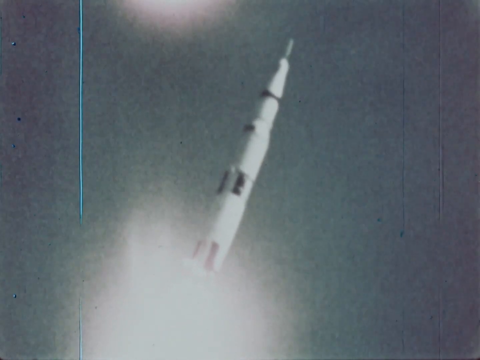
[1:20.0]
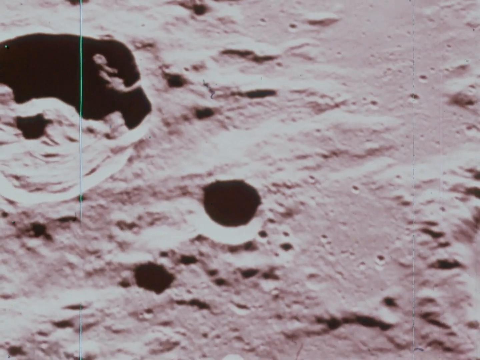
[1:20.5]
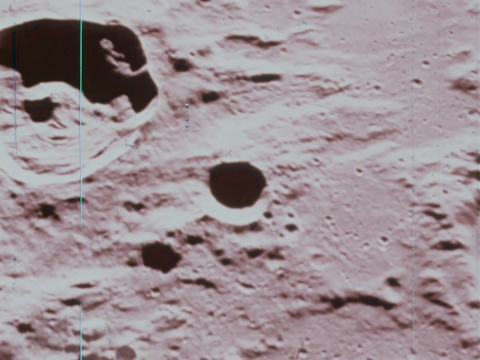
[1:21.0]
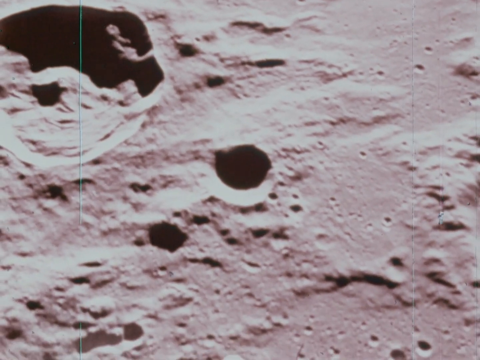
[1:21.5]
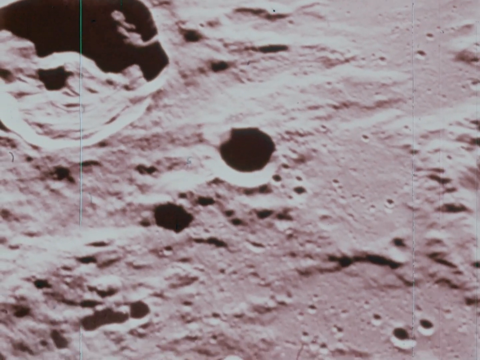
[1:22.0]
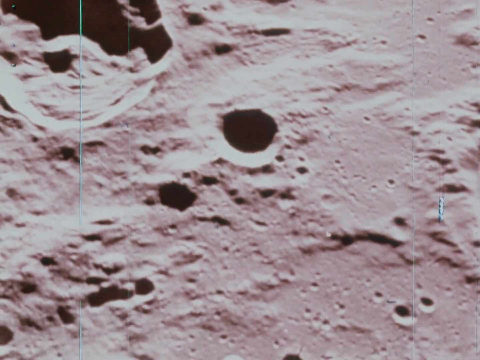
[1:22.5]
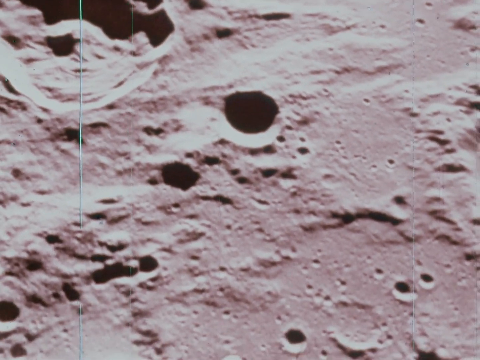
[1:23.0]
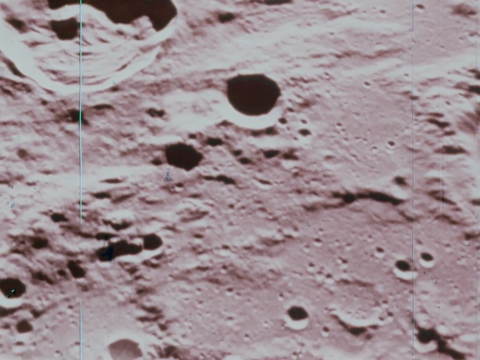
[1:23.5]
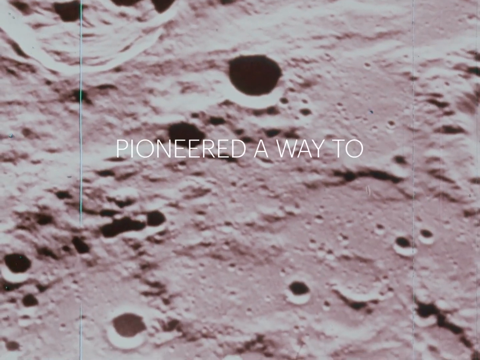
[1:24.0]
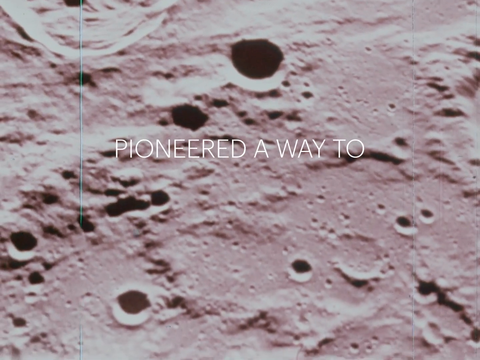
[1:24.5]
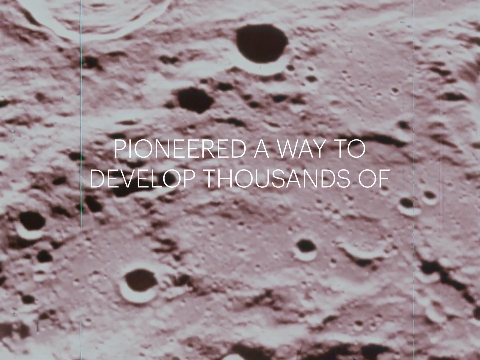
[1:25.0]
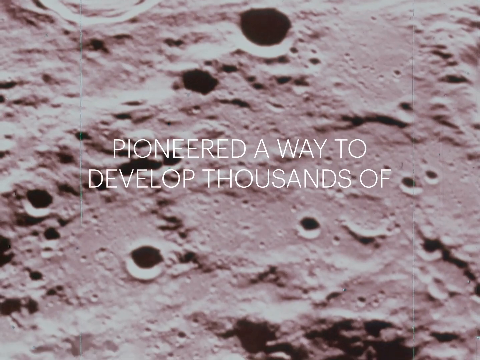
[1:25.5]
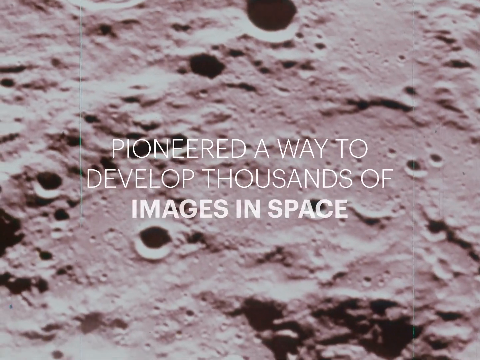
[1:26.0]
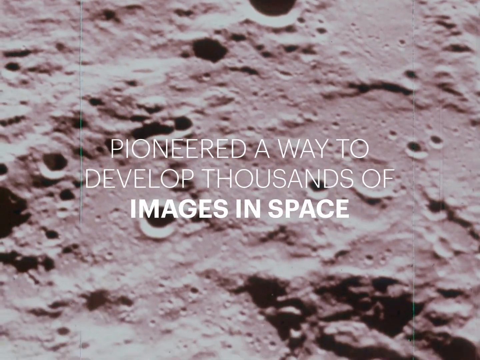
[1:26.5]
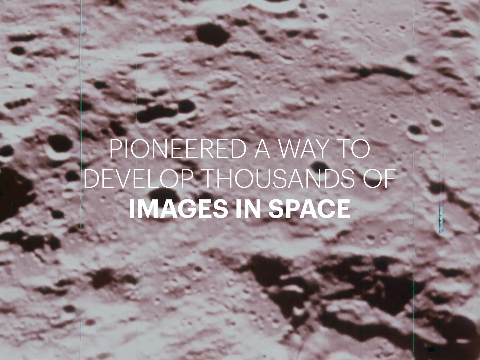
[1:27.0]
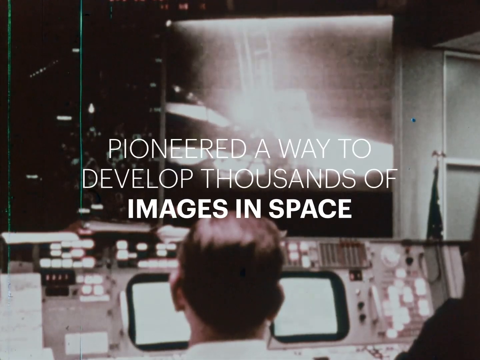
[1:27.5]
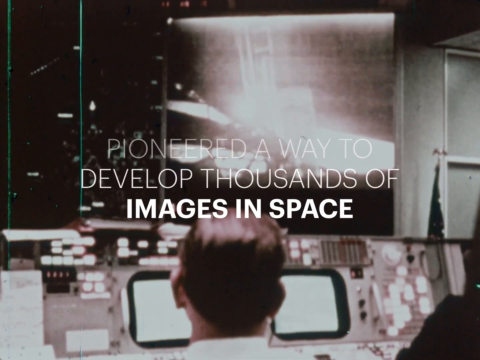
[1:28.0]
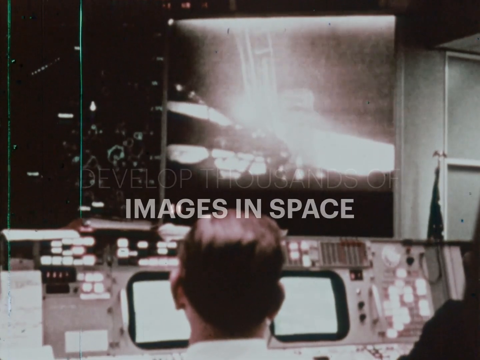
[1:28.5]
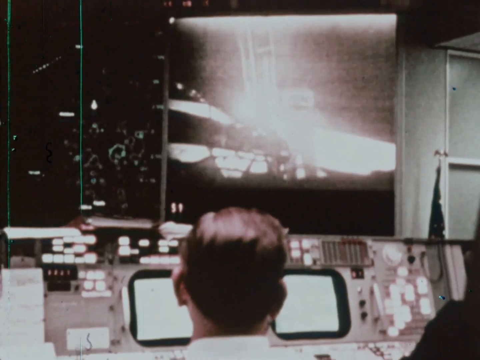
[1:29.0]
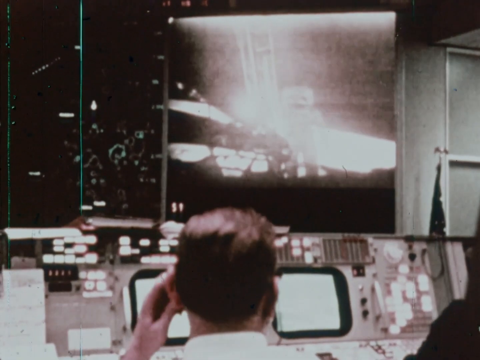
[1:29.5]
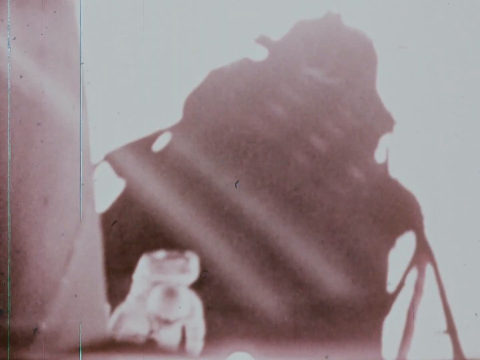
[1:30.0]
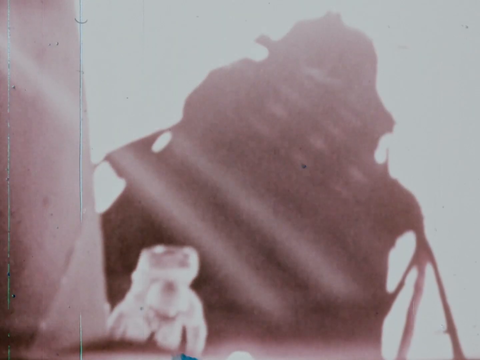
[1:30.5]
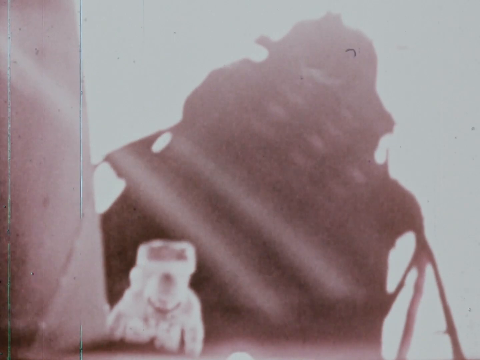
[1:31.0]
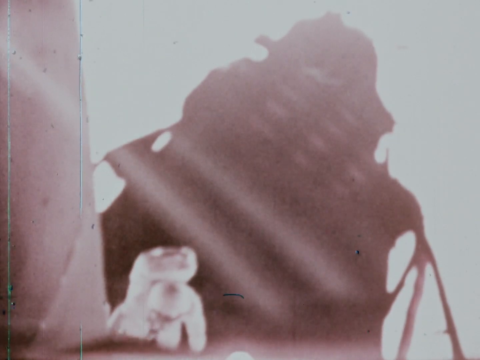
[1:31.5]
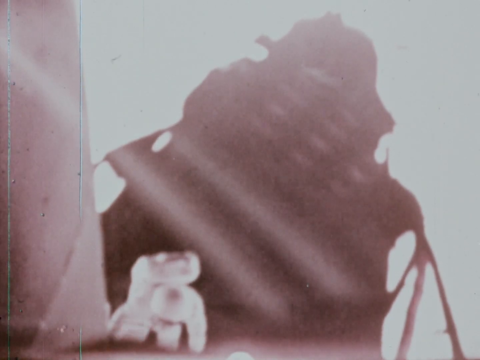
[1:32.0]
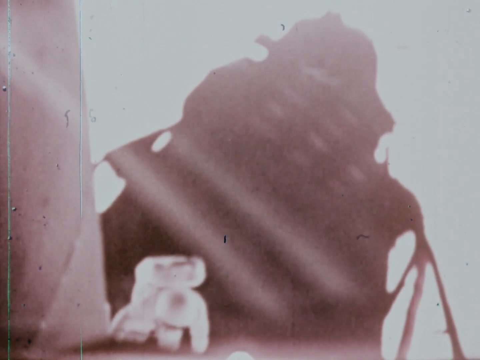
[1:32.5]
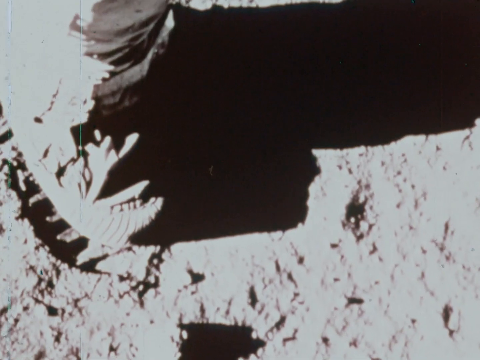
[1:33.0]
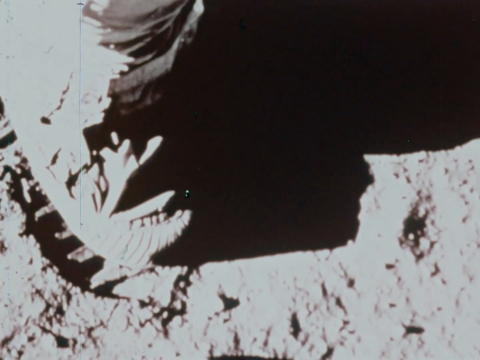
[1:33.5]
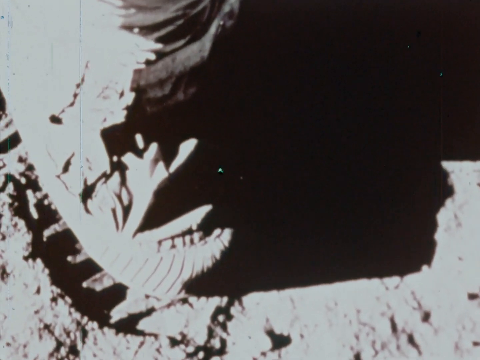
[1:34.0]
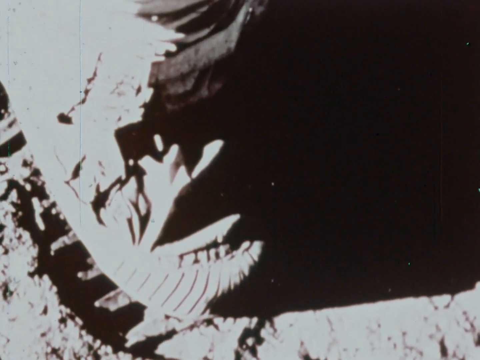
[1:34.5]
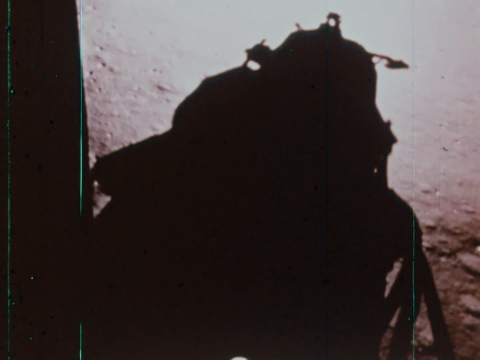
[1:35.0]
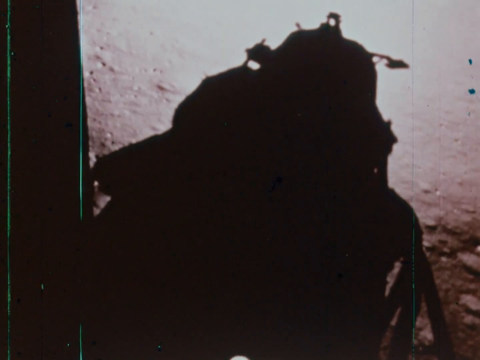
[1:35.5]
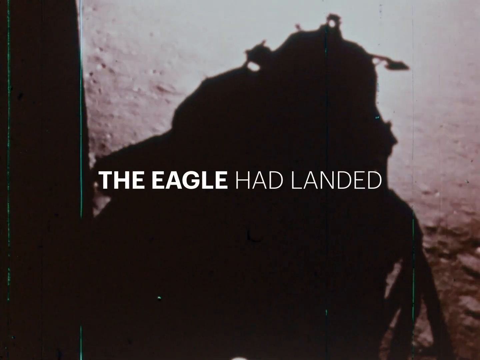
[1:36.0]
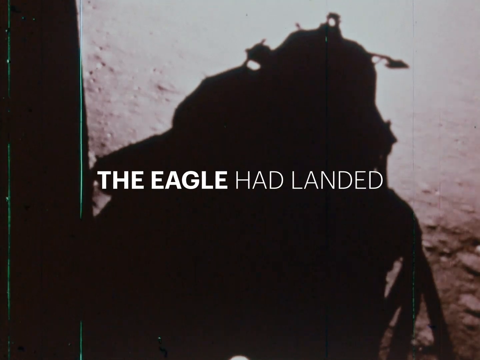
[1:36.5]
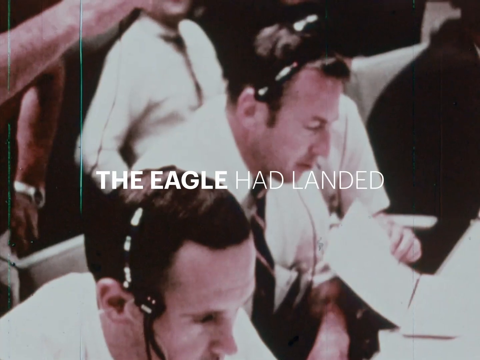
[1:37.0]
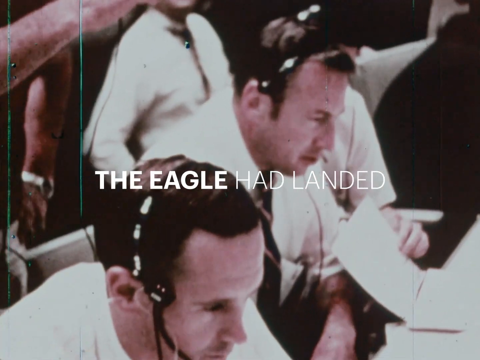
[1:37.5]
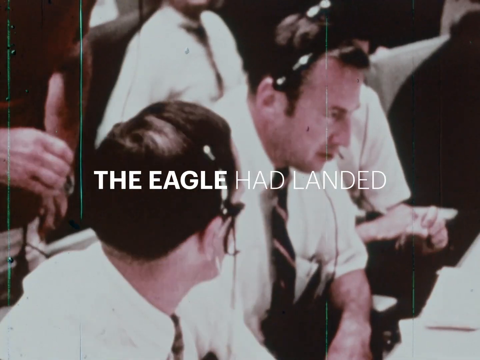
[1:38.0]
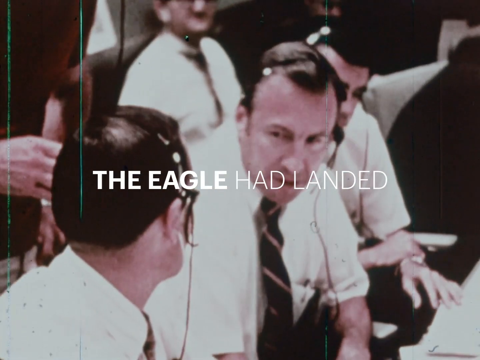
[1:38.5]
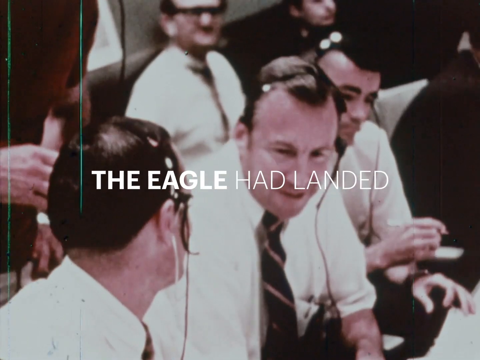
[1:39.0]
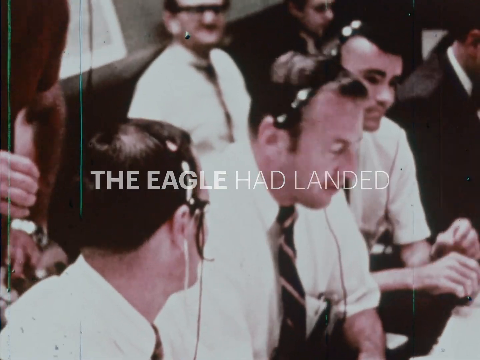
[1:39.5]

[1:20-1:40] Close-up video clips show what looks to be the moon, its surface rugged with several holes. The words "pioneered a way to develop thousands of images in space" appear in the middle. The room seen earlier returns, with several computer screens, buttons and wires, and the back of a seated man in a white shirt. An infrared video shows an astronaut next to the spaceship, followed by the words "the eagle had landed." Several men in that room are shown talking among each other, wearing headsets, in front of the computerized stations. The video is in a square shape and is low in quality, apparently because it was recorded a while ago.